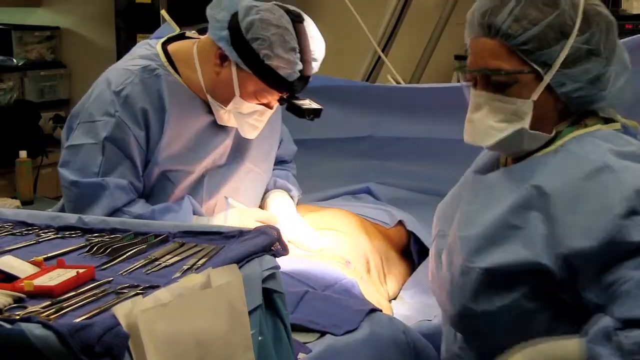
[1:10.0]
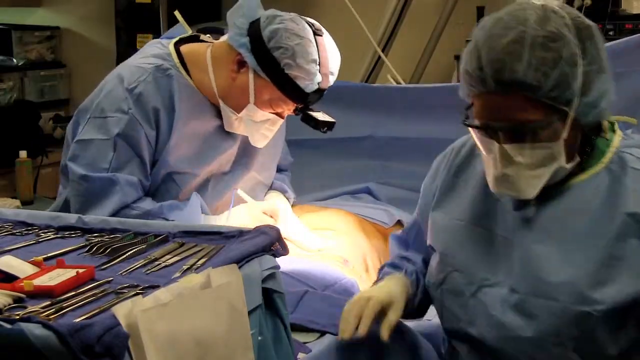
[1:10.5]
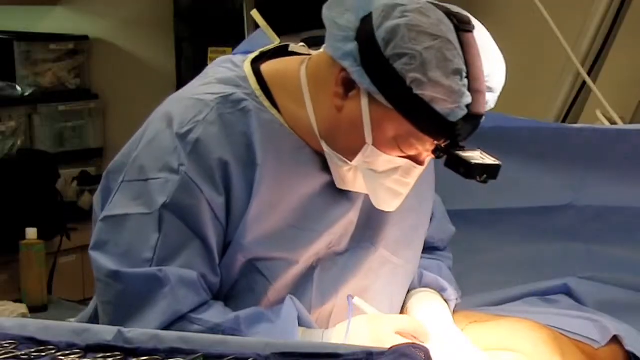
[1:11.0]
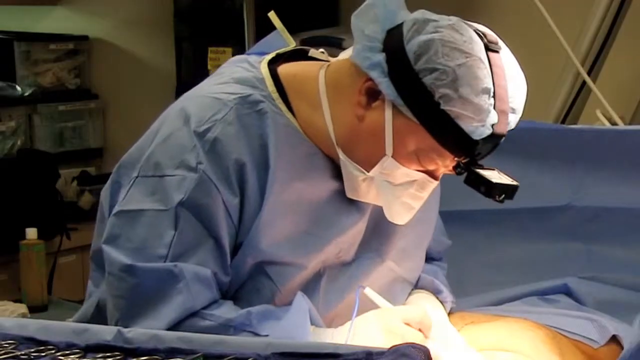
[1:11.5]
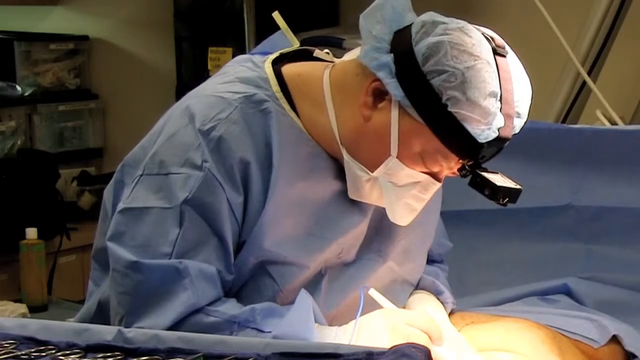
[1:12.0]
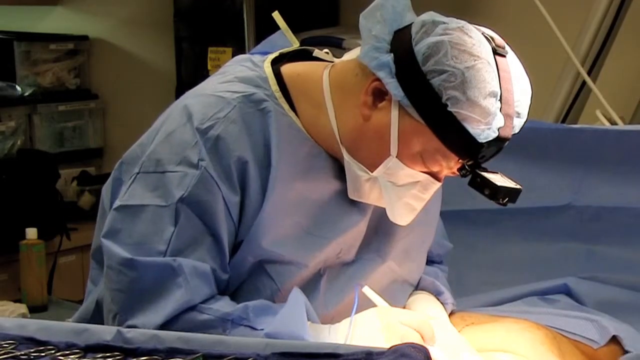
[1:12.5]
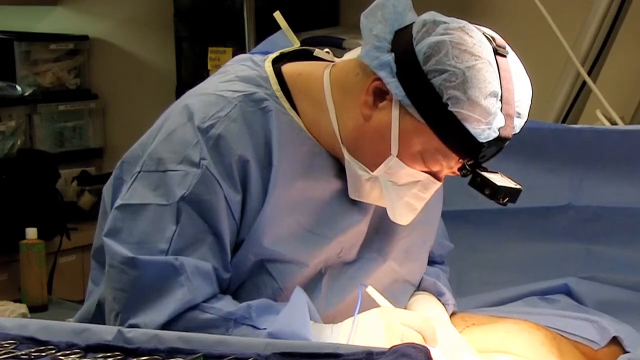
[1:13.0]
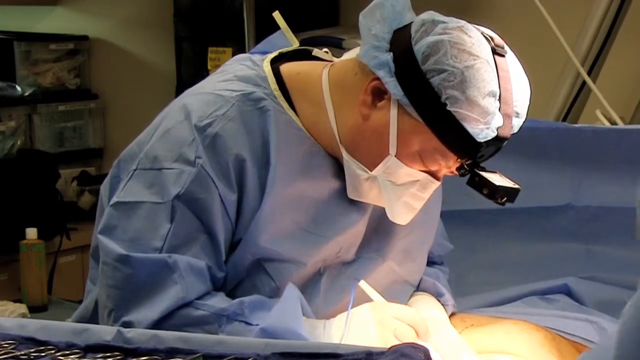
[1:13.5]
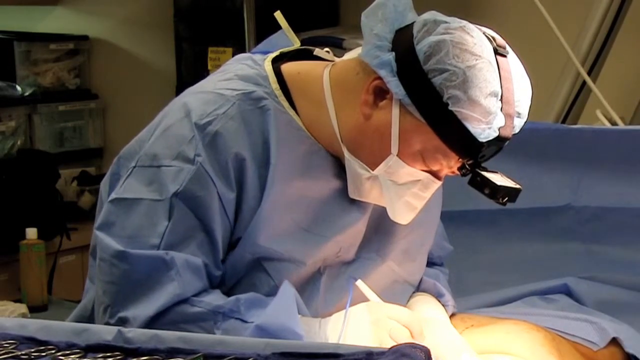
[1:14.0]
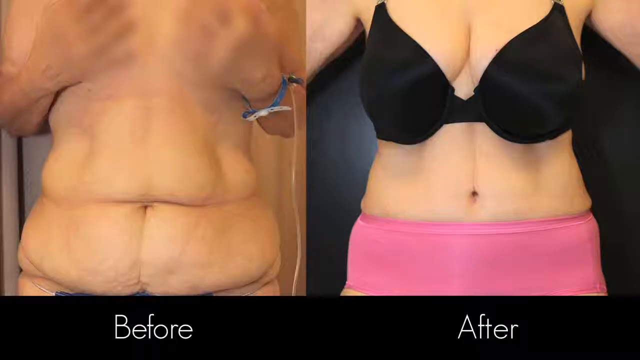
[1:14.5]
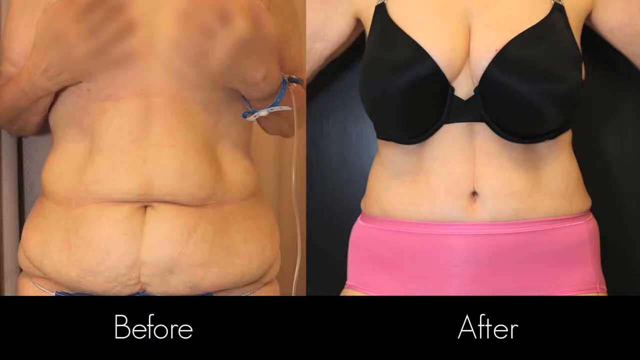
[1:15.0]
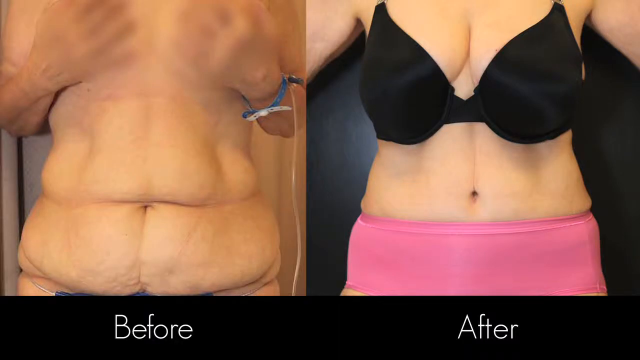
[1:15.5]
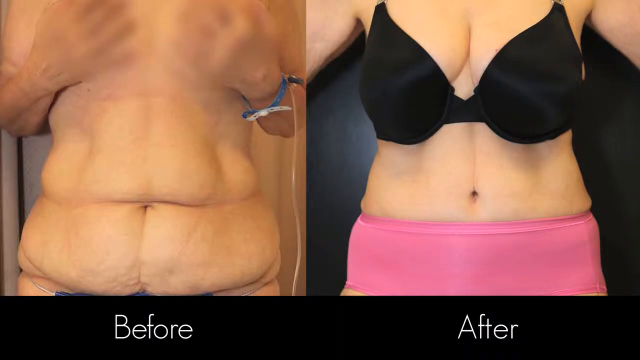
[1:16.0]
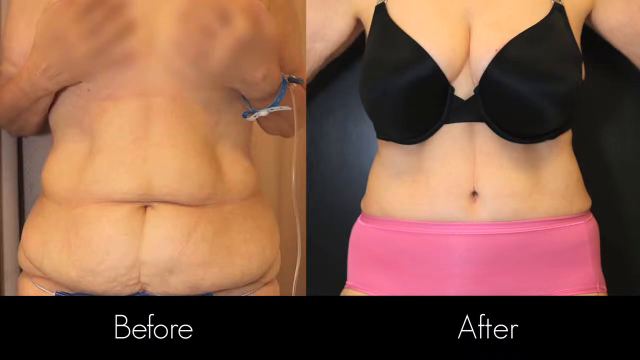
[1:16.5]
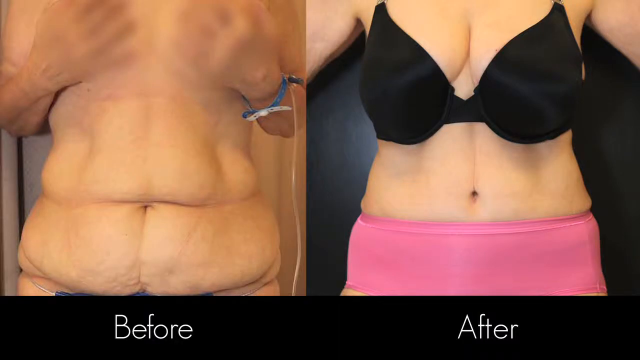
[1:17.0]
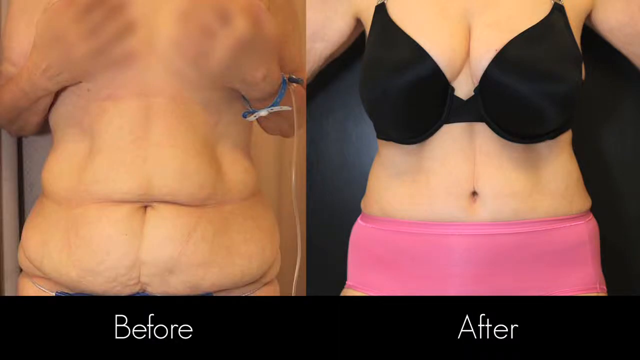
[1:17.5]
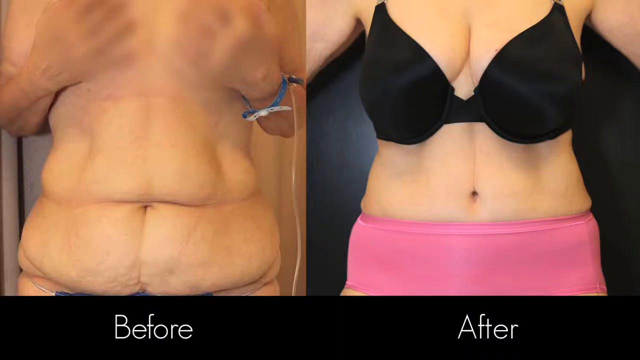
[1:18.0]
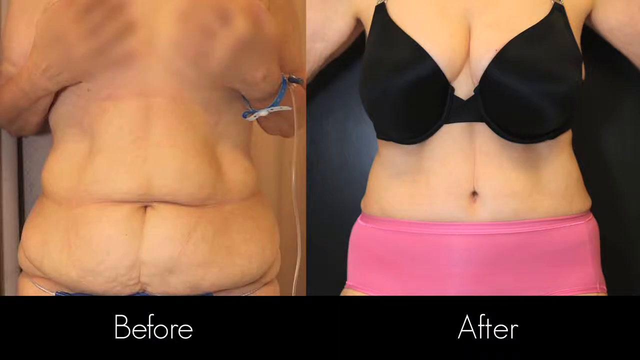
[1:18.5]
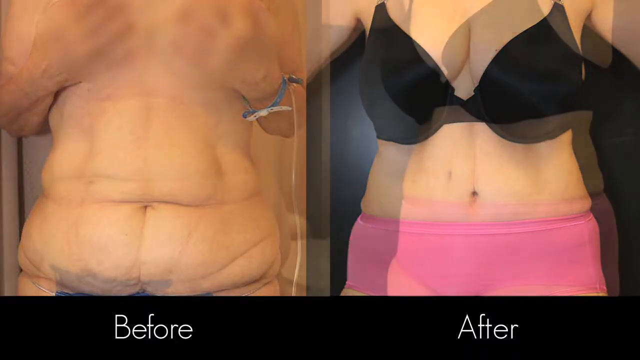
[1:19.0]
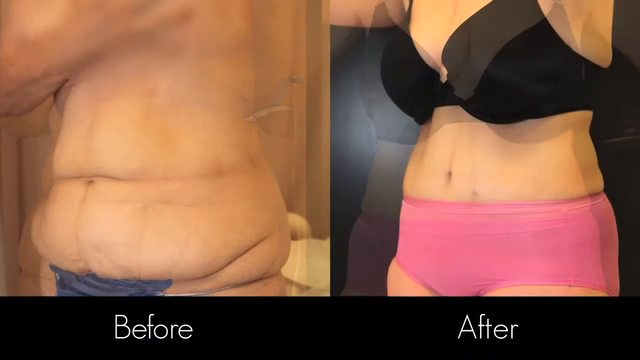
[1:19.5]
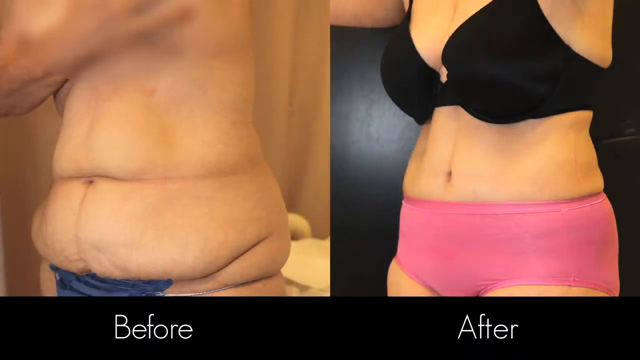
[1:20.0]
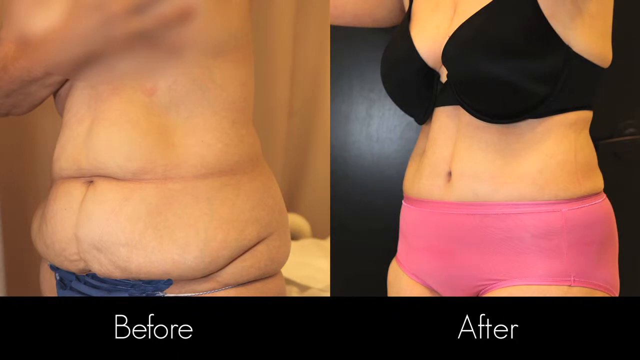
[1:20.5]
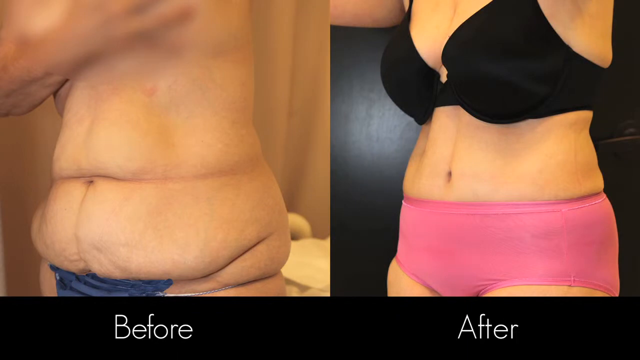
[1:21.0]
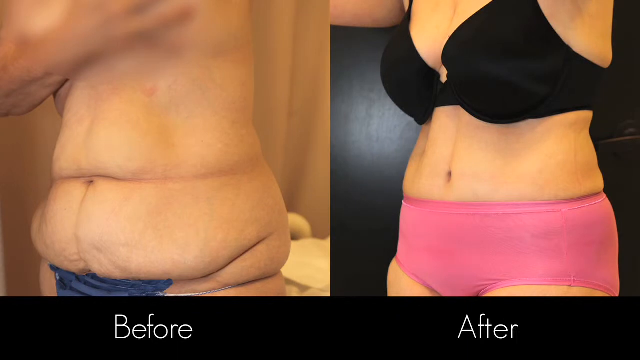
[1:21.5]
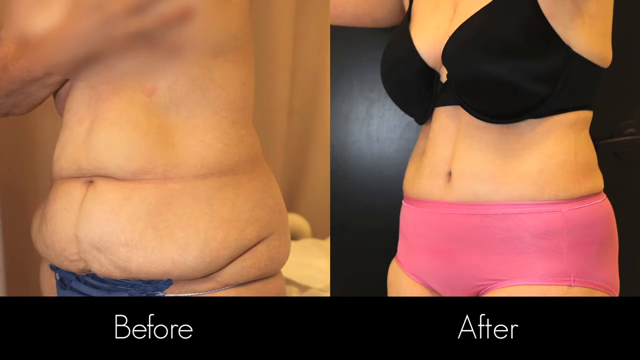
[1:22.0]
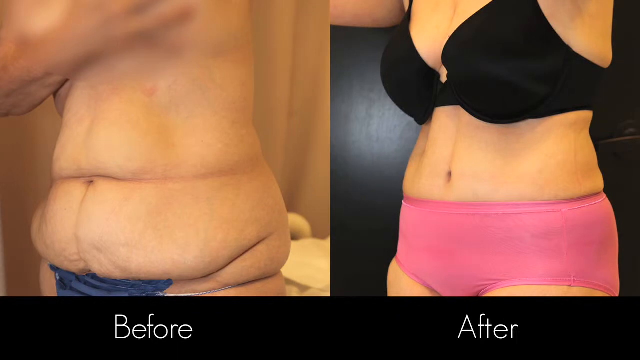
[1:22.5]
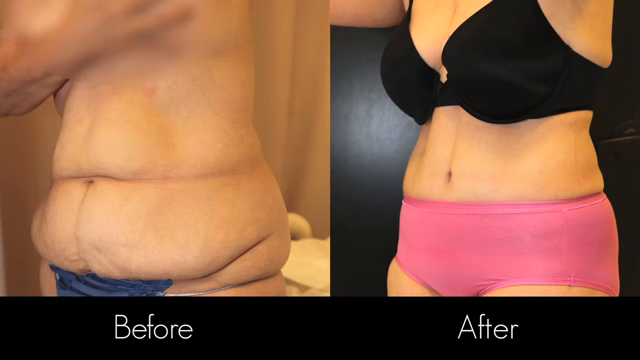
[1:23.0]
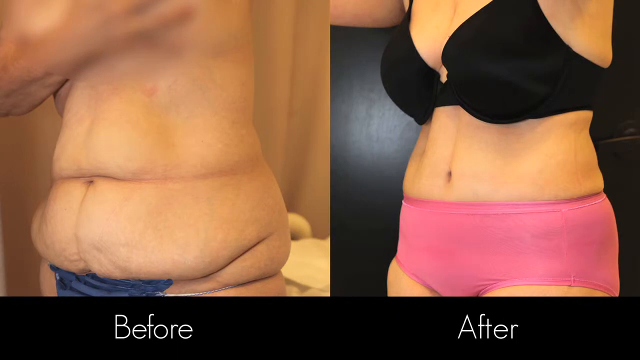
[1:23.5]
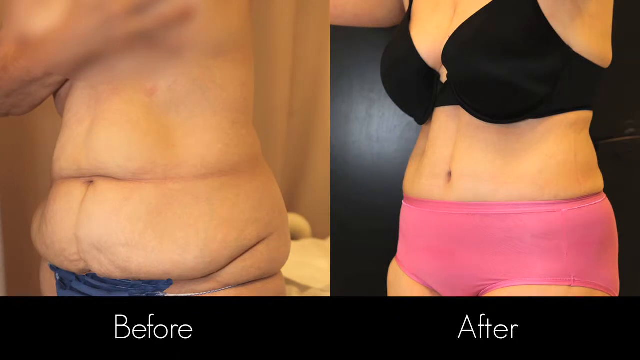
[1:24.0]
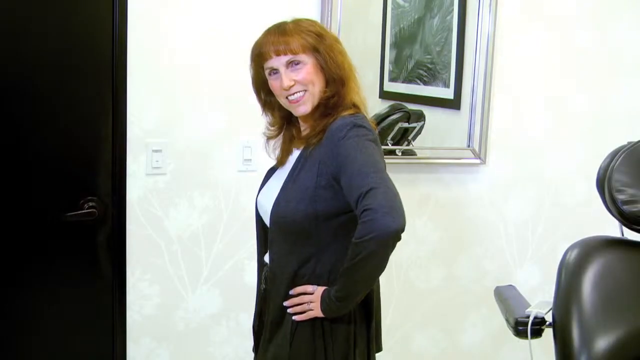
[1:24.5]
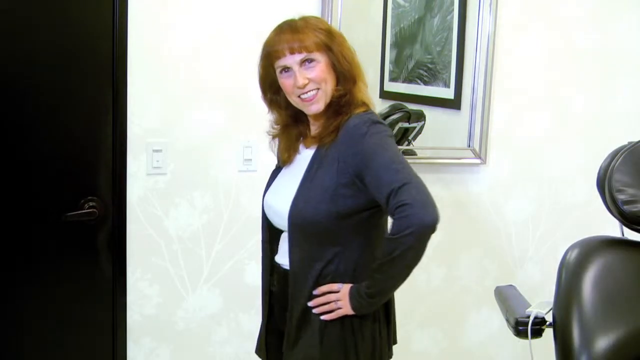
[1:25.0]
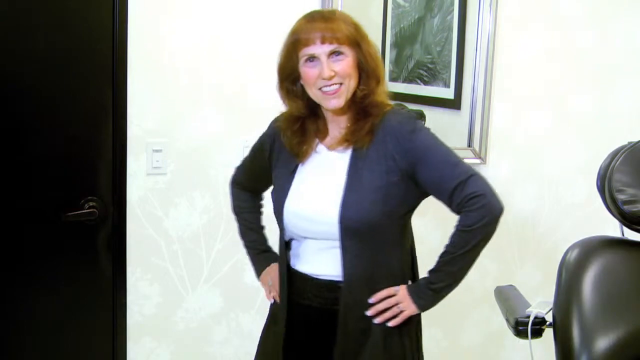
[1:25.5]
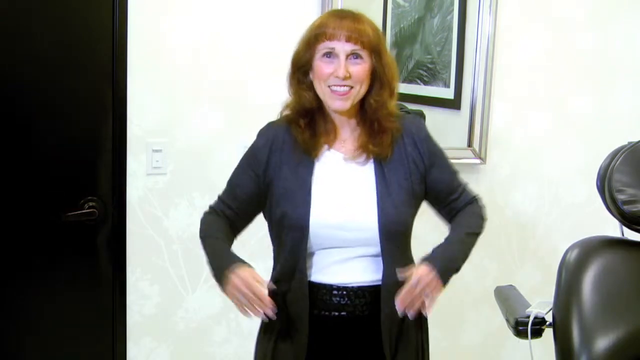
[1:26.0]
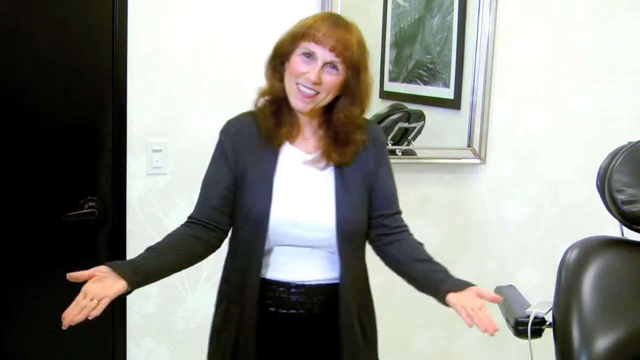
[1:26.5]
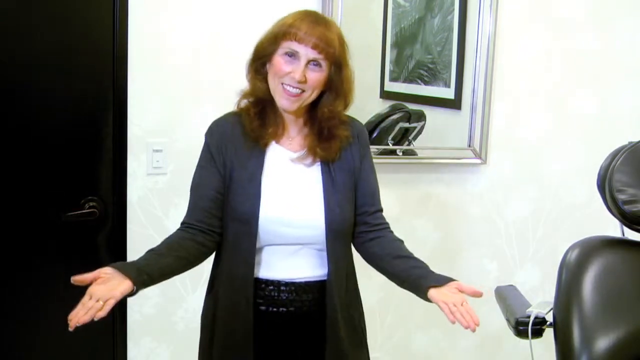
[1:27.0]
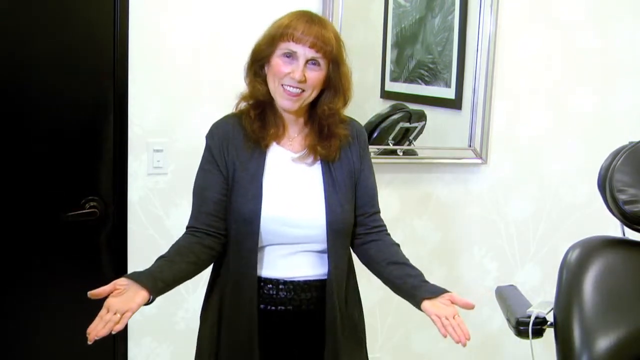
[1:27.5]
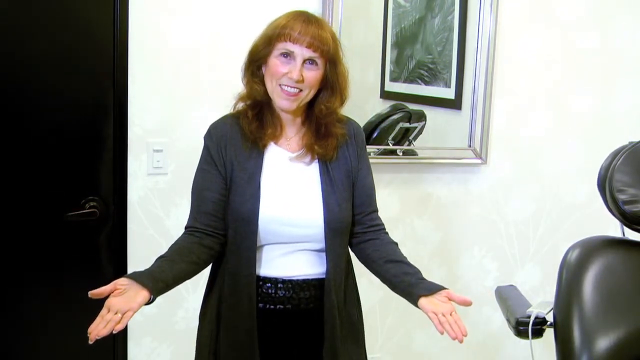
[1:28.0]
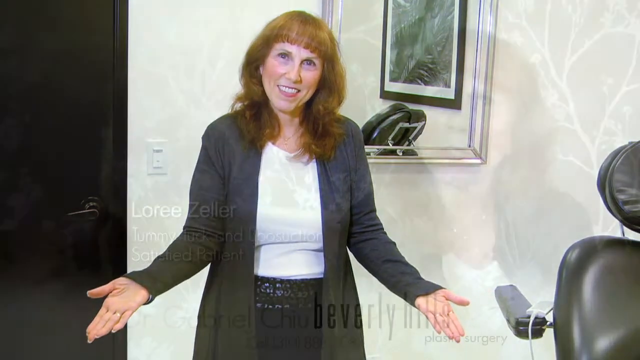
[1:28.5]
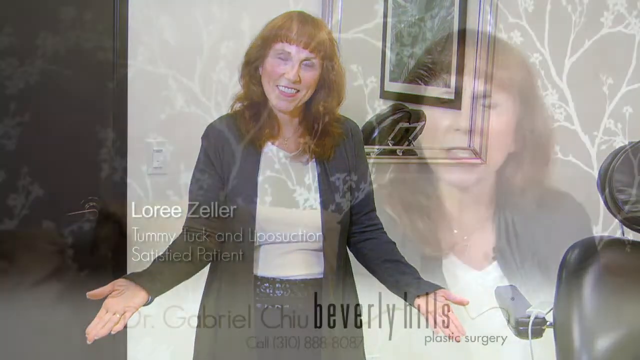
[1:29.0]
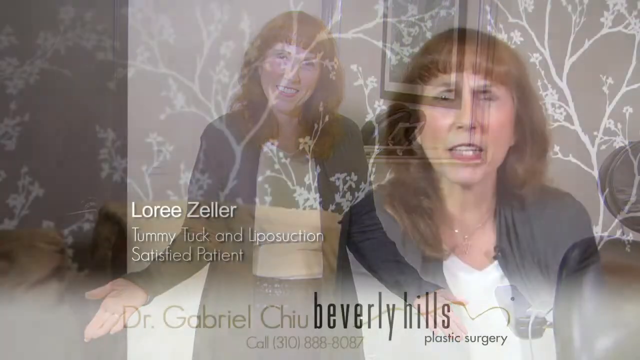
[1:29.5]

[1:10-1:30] More footage of the open surgery follows, possibly on the same patient who was interviewed, though this is not clear. The view shows the surgeons and a little exposed skin under the coverings on the person, with utensils they are using on a table. The surgeons wear headlights, white surgical face masks and blue surgical gowns as they operate. The video cuts to a before-and-after showing a huge removal of excess skin, a clear and visible transformation. In the next shot, the same woman, fully clothed, presents herself to the camera, appearing happy and confident, presumably after the surgery.